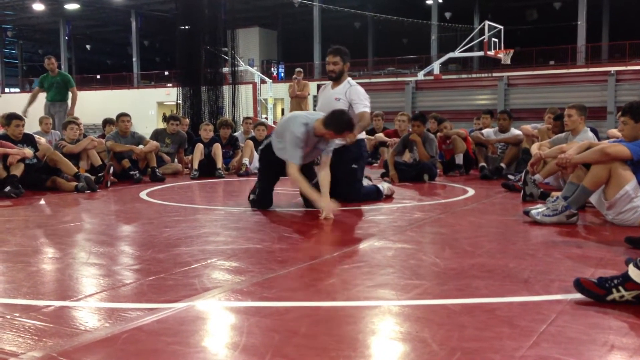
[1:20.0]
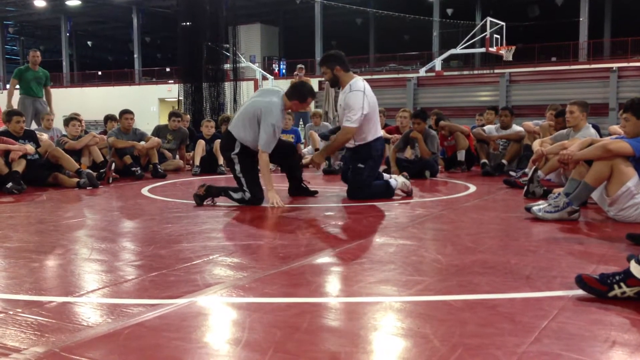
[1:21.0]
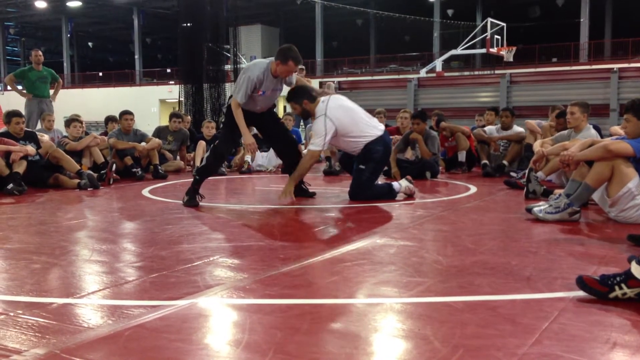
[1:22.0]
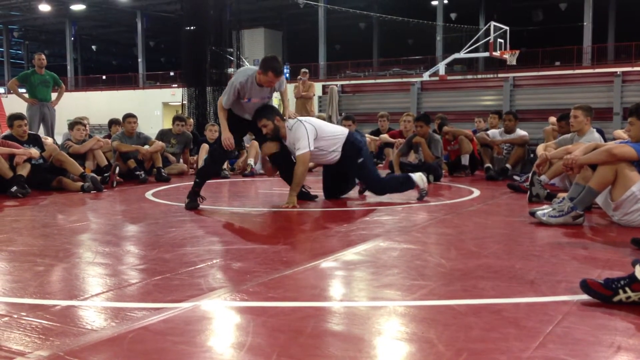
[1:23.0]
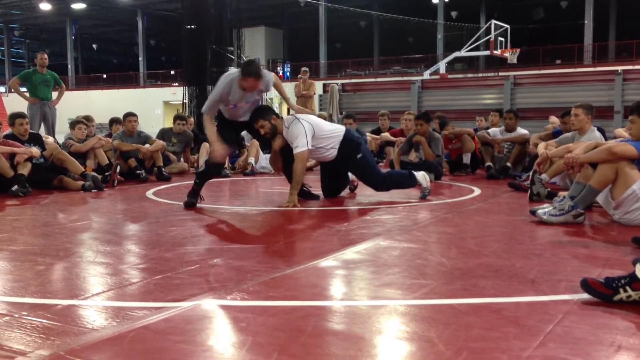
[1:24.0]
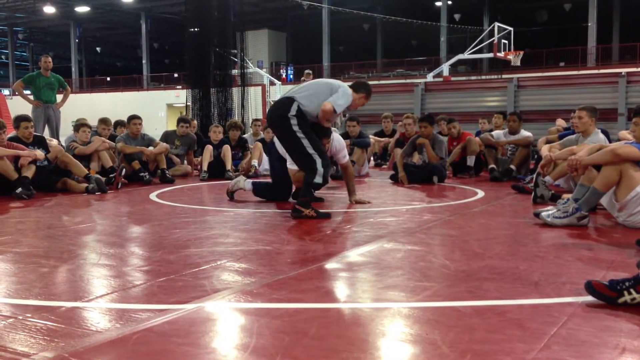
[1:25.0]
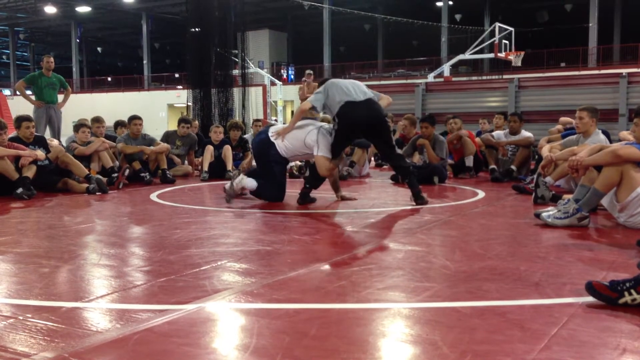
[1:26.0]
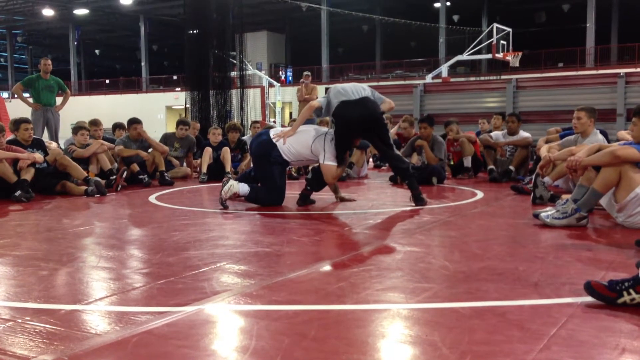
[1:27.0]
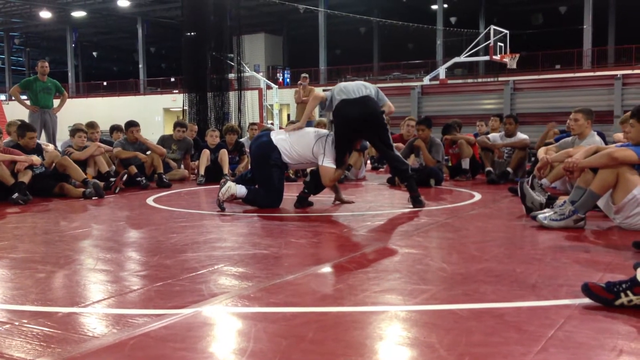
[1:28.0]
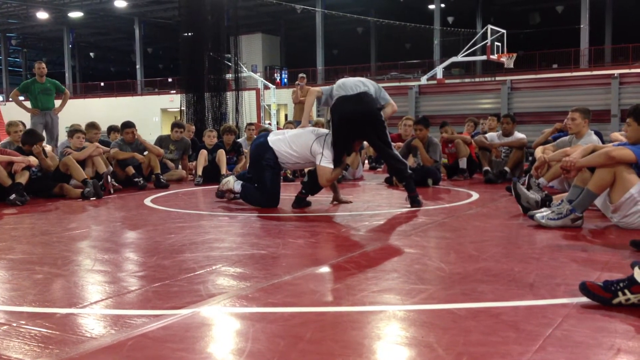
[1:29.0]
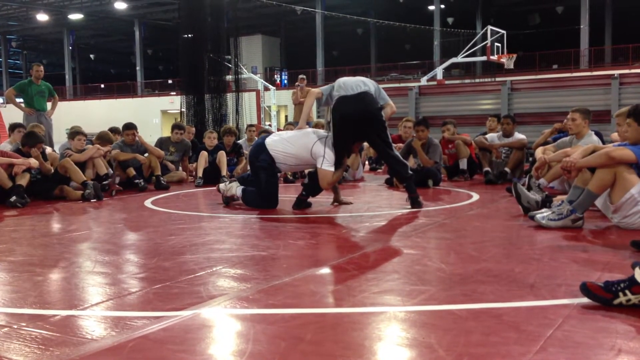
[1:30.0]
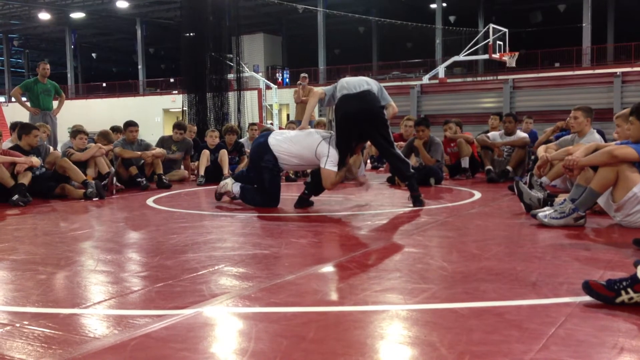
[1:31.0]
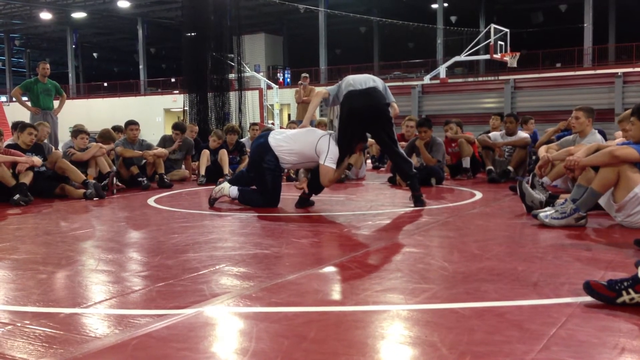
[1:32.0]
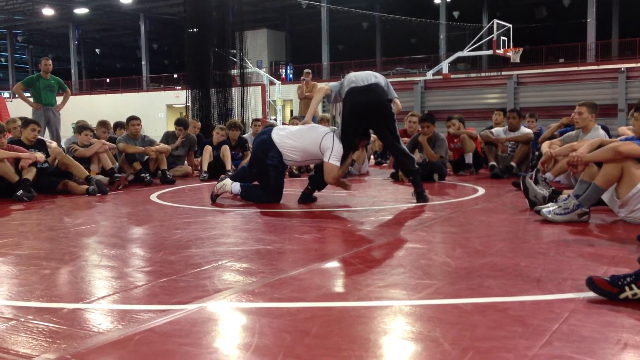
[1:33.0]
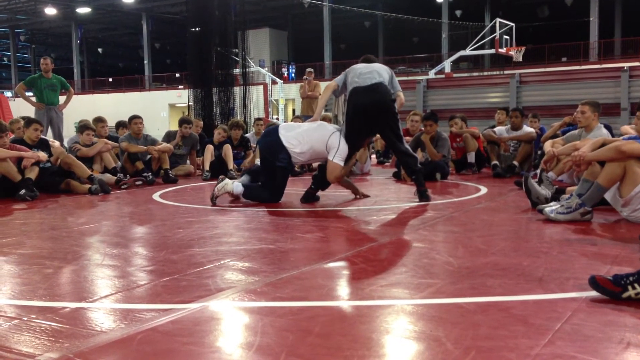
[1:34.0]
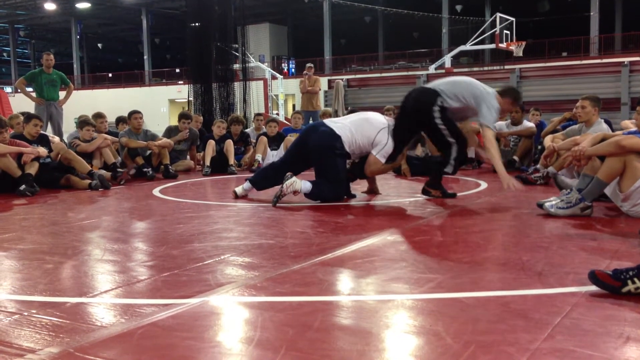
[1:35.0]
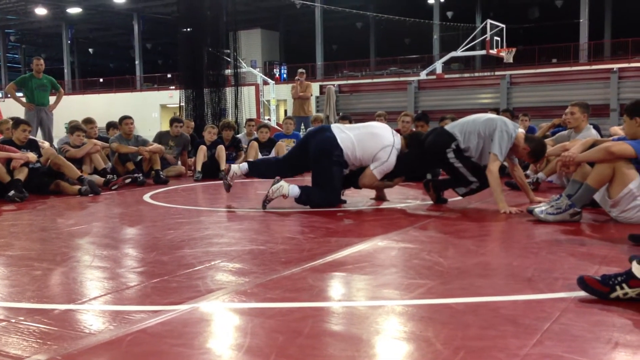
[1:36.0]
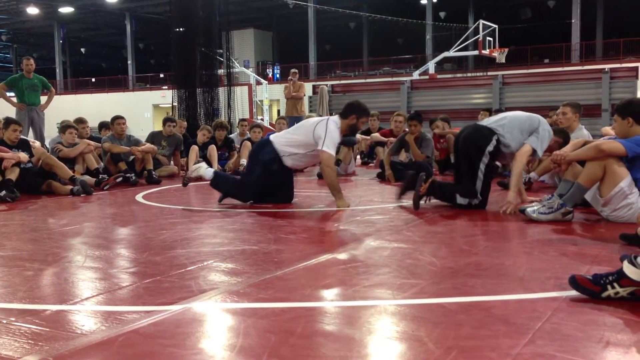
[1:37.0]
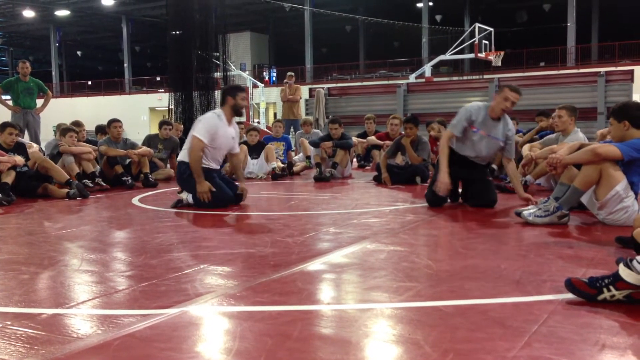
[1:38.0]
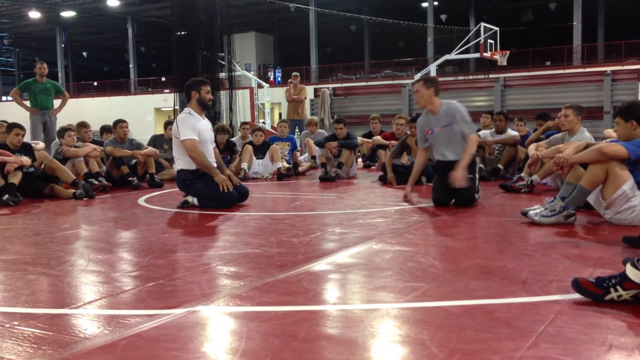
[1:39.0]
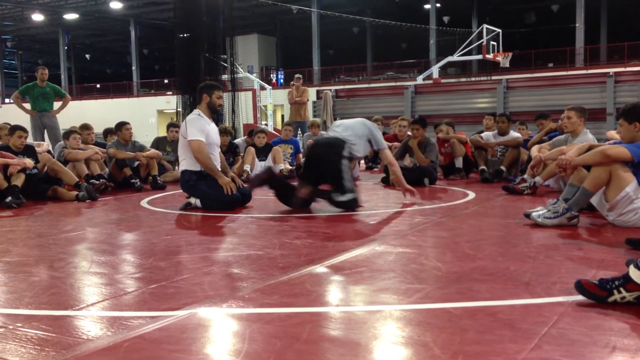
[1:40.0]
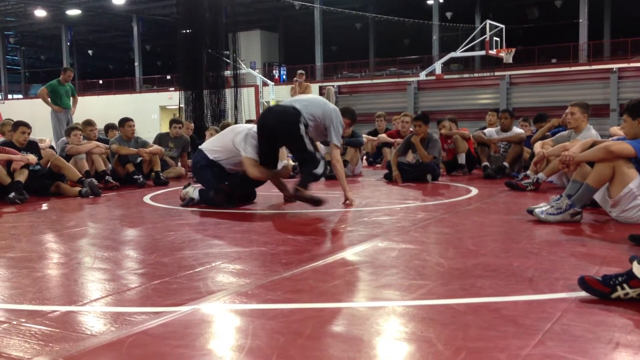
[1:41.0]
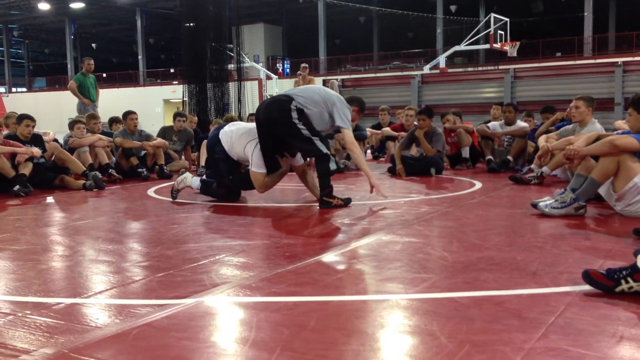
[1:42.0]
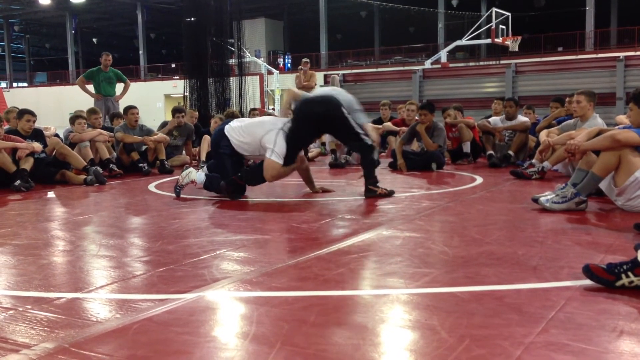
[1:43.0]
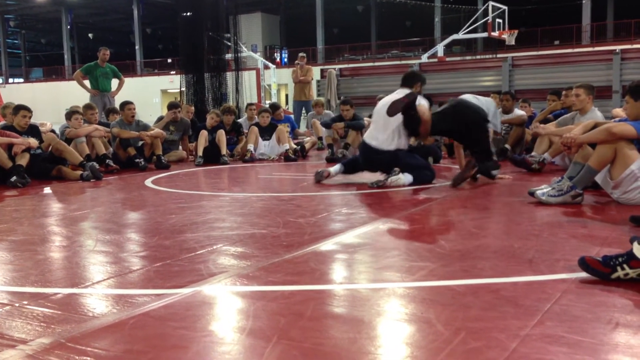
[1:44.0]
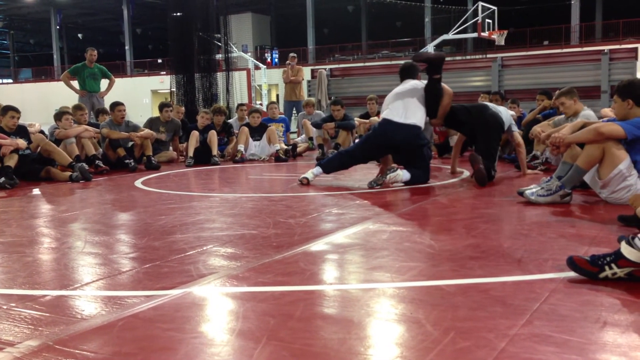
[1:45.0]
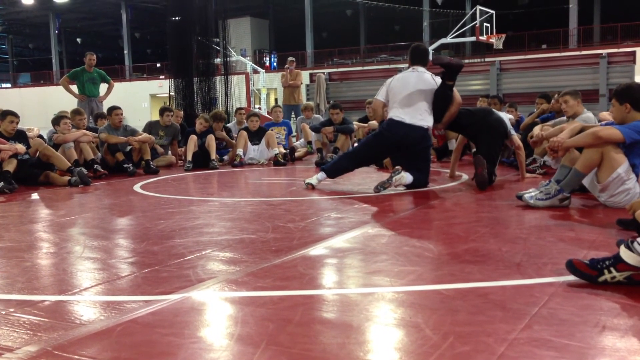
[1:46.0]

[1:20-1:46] The man in gray is on his hands and knees while the man in white is on his knees waiting, and the boys are still watching attentively. They take new positions: the man in gray rises to his feet, bent over, with one hand on the man in white's back, while the man in white wraps his right arm back around the man in gray's knee and does circles as the man in gray keeps one foot stationary and uses his other foot to circle. They pause and talk to the boys. The man in white uses his free arm to gesture on the floor around and beneath him, apparently indicating the movements they are supposed to make for this wrestling position. The man in gray falls forward onto his hands, knees bent, close to the edge where the boys are circled. The man in white releases him, and the man in gray crawls to his knees, turns around and resumes the position in front of the man in white. The man in white again grasps his left knee and they begin the technique again, with the man in gray getting out of the wrestling circle on his hands and knees, one leg raised in the air and held onto by the man in white.